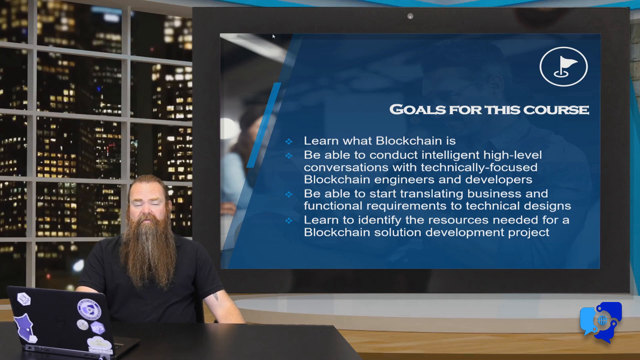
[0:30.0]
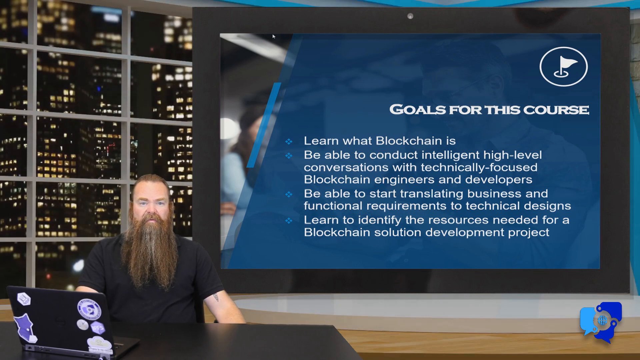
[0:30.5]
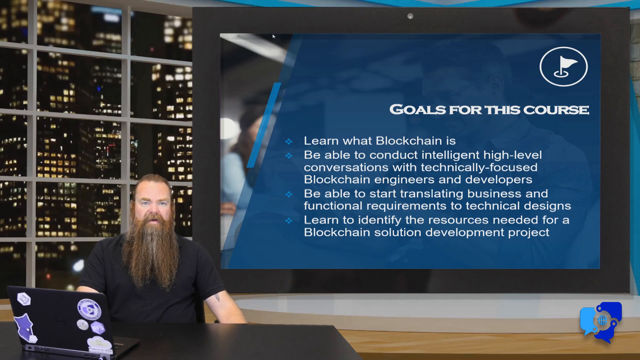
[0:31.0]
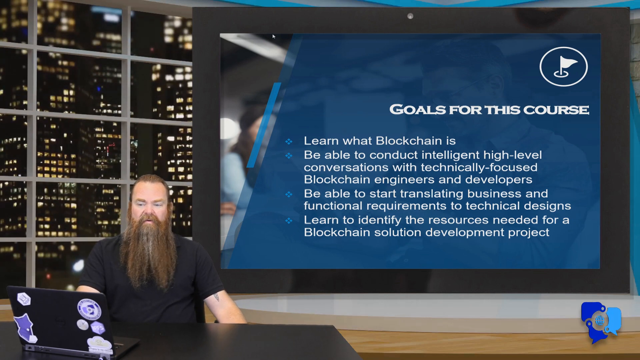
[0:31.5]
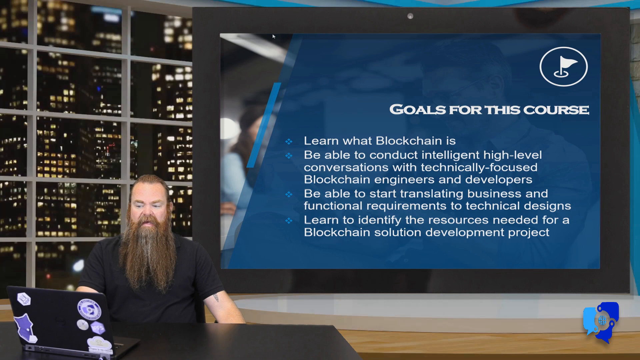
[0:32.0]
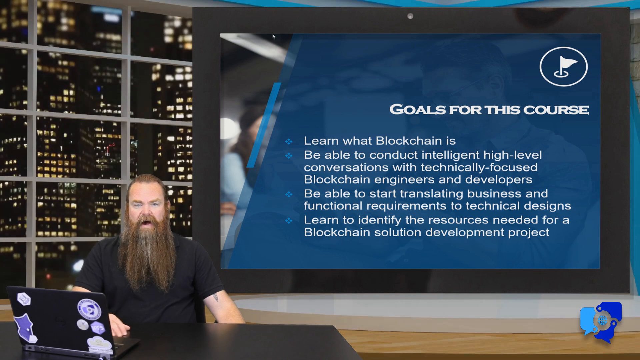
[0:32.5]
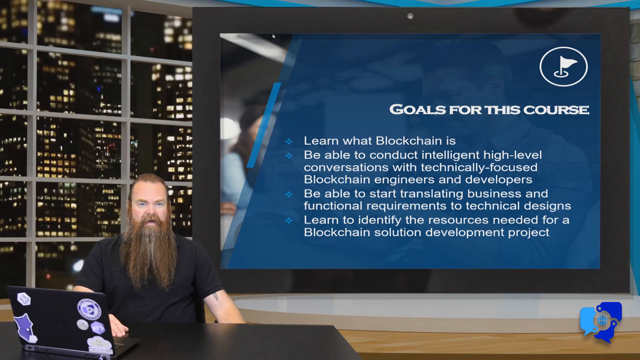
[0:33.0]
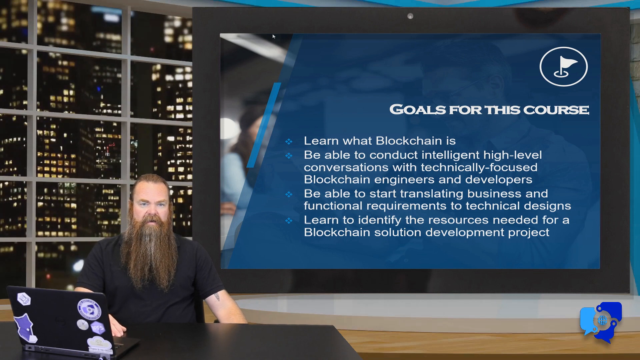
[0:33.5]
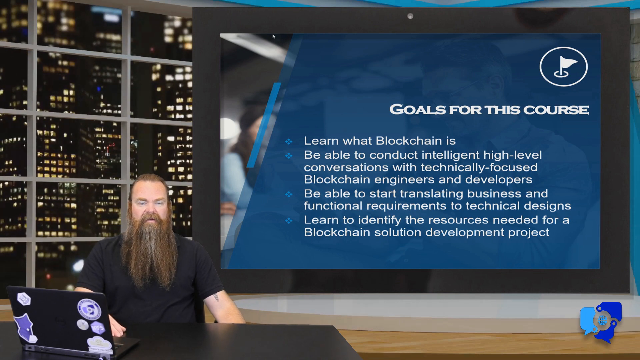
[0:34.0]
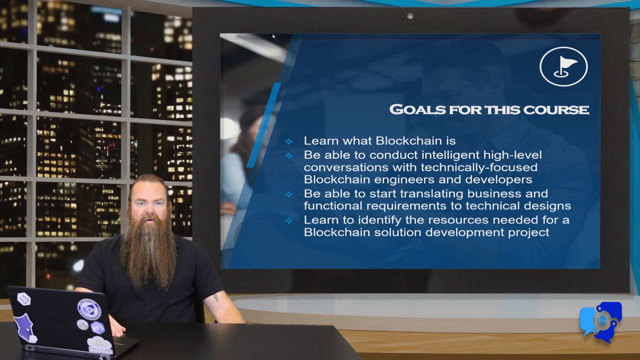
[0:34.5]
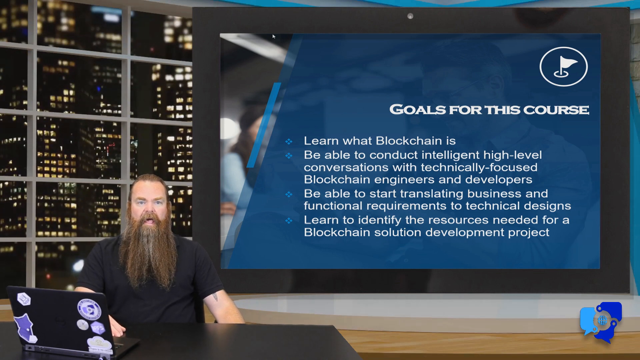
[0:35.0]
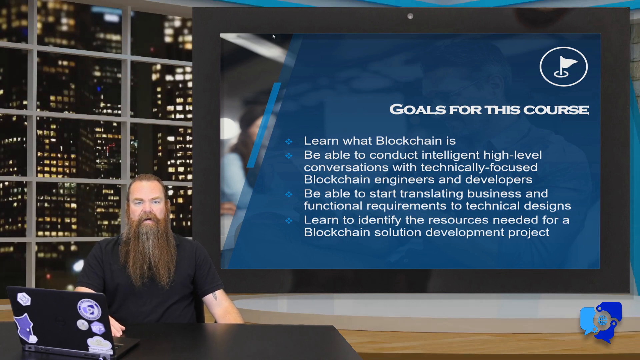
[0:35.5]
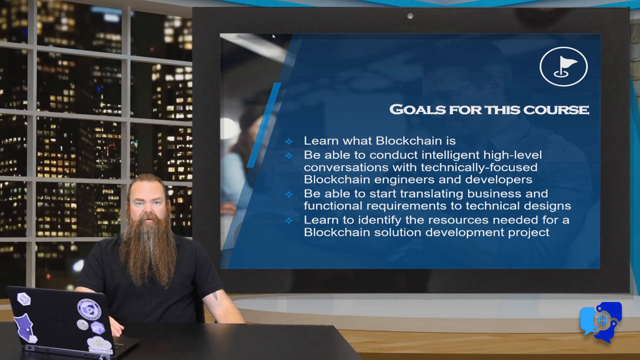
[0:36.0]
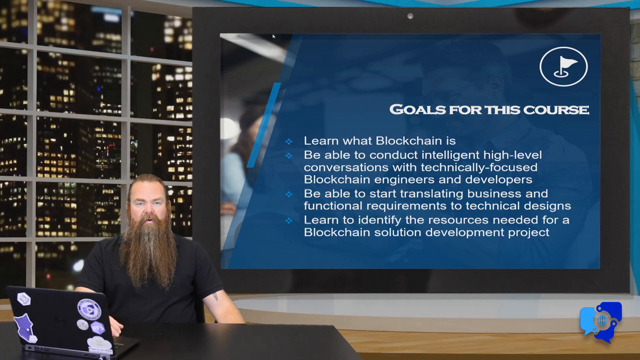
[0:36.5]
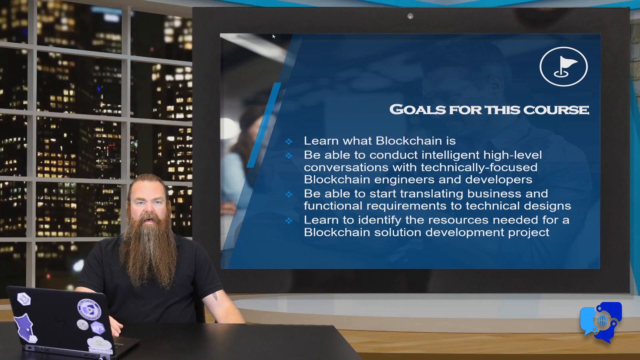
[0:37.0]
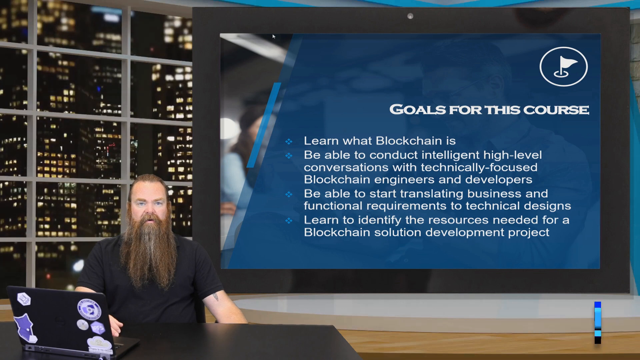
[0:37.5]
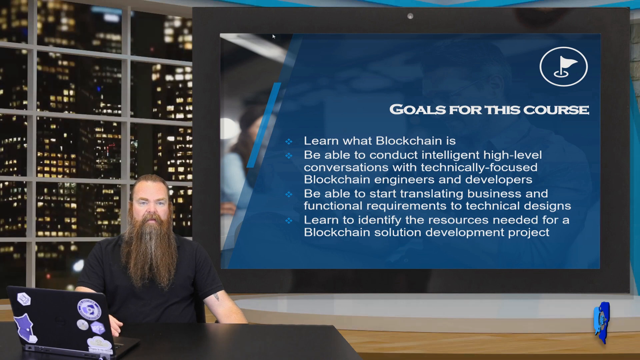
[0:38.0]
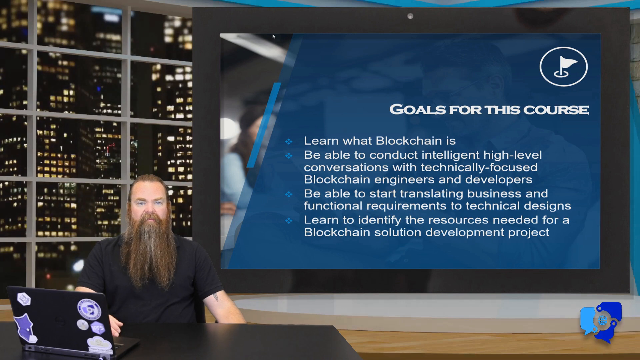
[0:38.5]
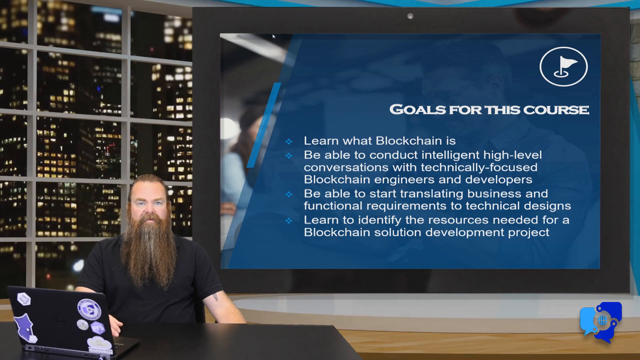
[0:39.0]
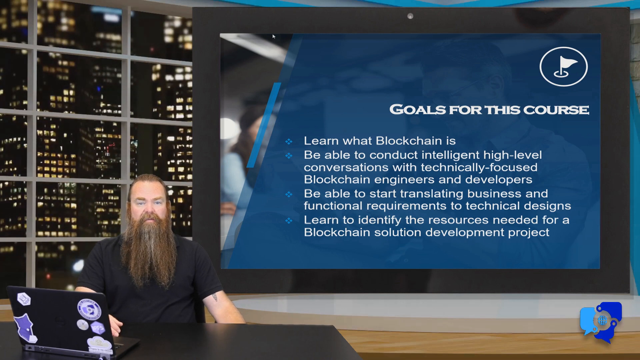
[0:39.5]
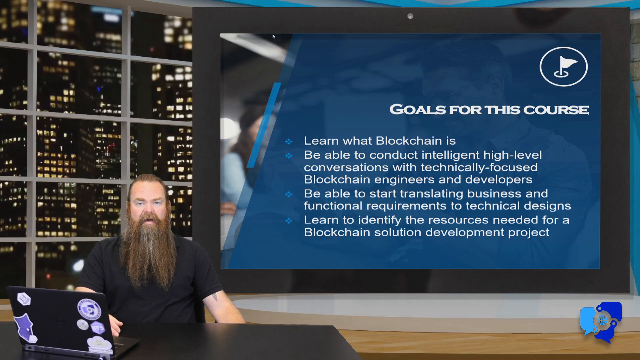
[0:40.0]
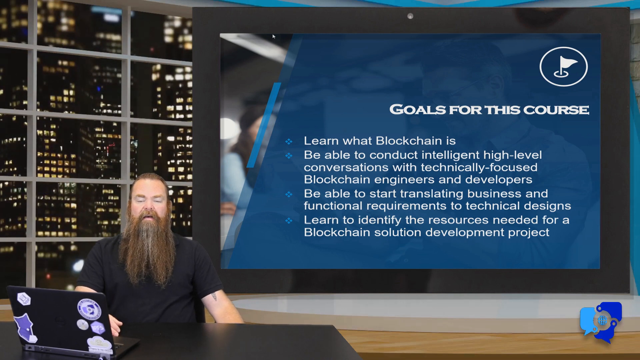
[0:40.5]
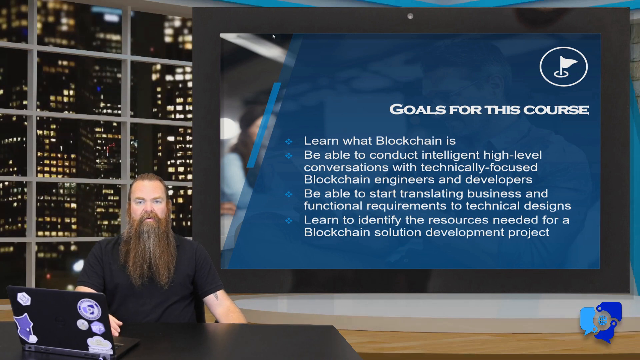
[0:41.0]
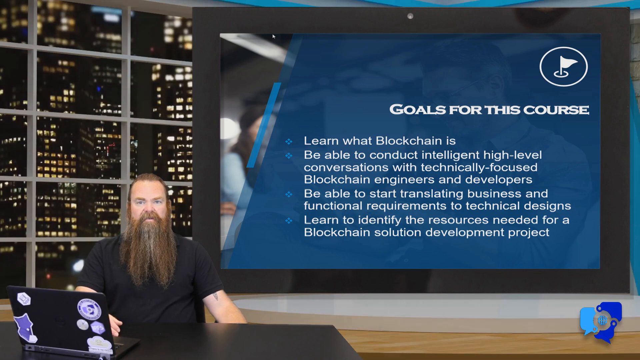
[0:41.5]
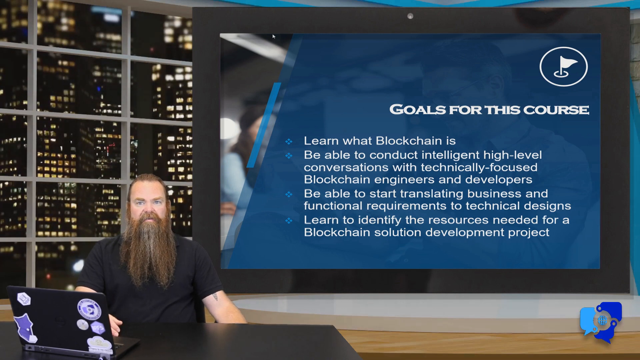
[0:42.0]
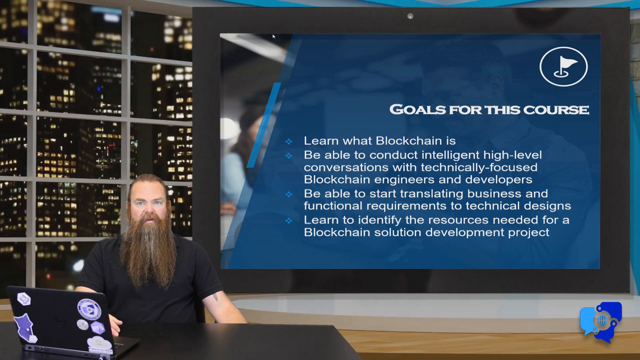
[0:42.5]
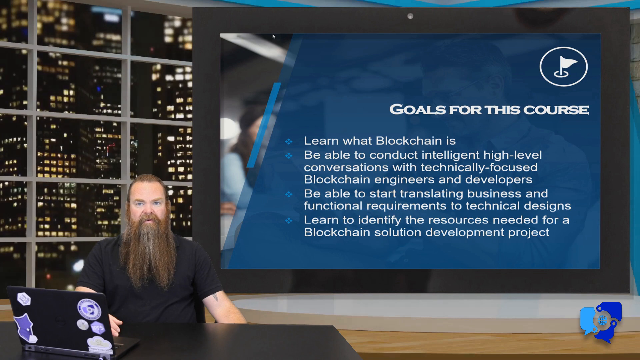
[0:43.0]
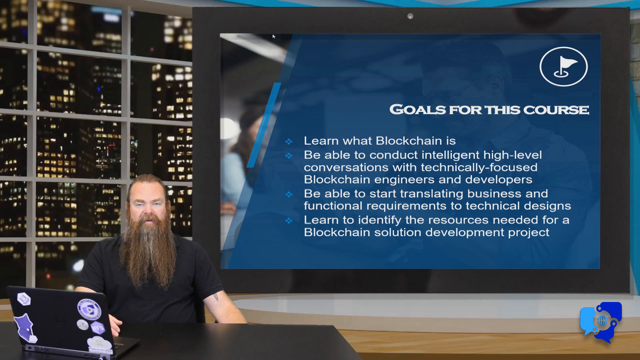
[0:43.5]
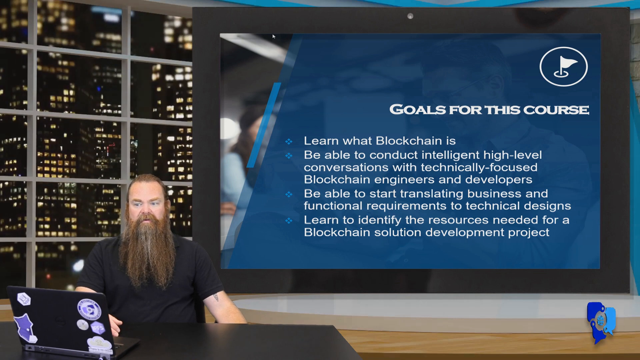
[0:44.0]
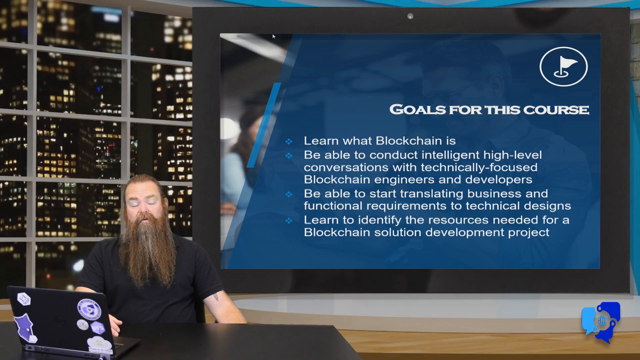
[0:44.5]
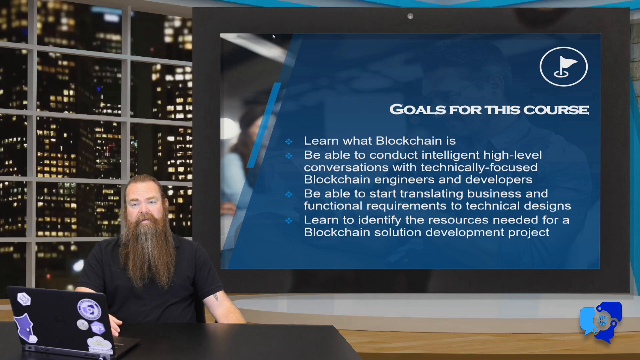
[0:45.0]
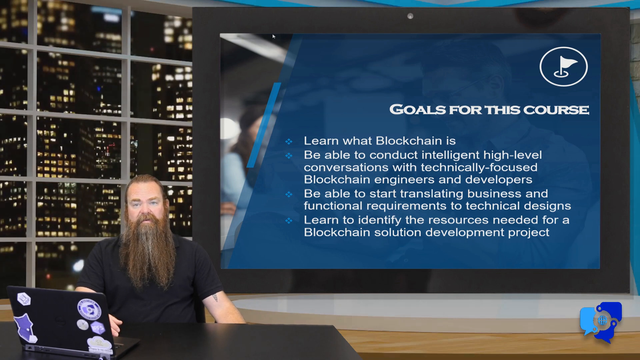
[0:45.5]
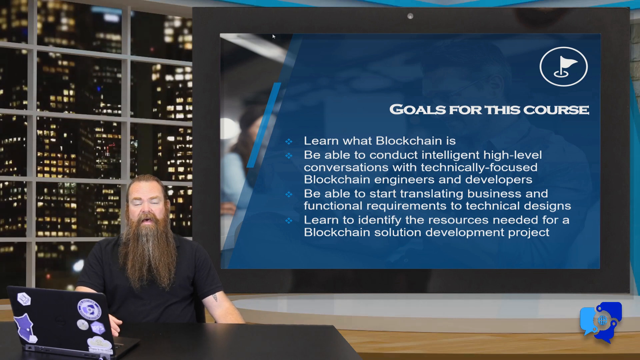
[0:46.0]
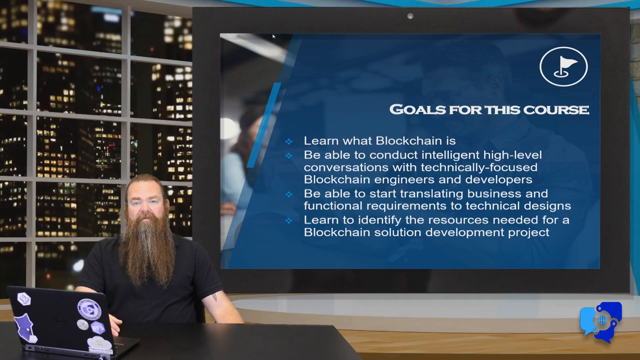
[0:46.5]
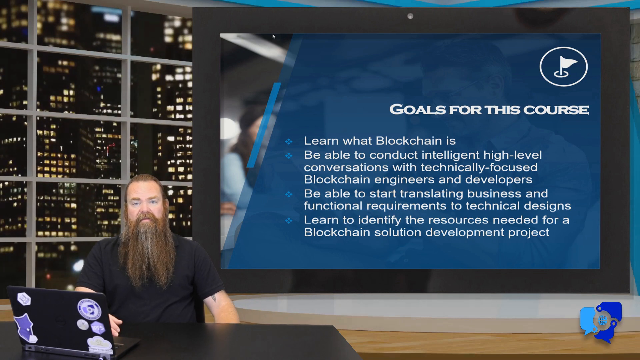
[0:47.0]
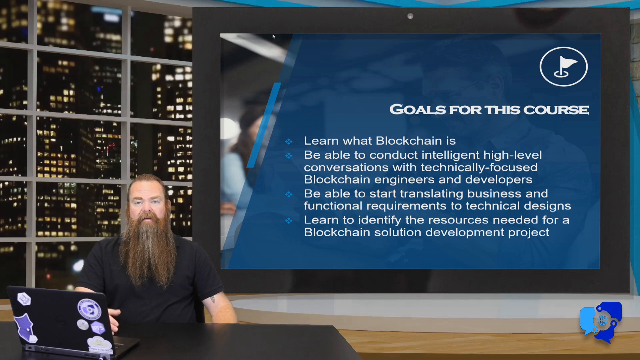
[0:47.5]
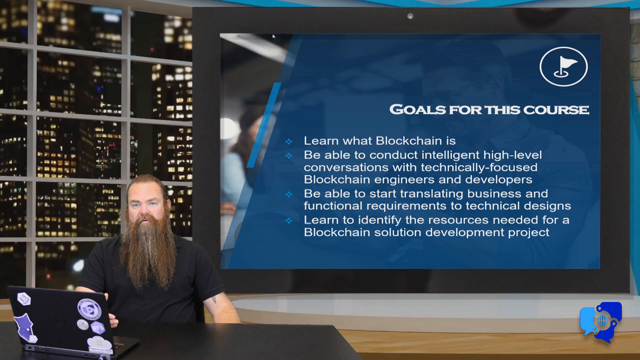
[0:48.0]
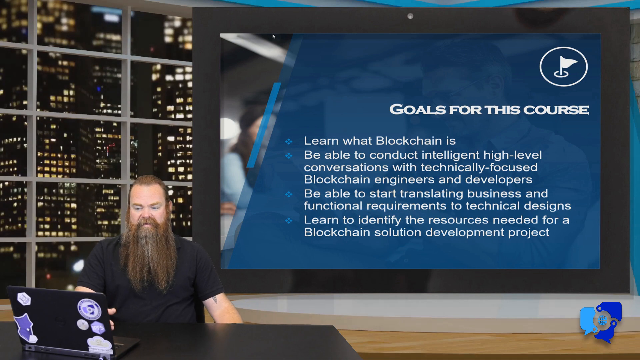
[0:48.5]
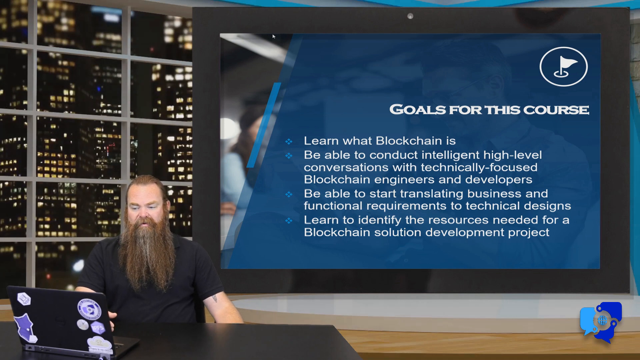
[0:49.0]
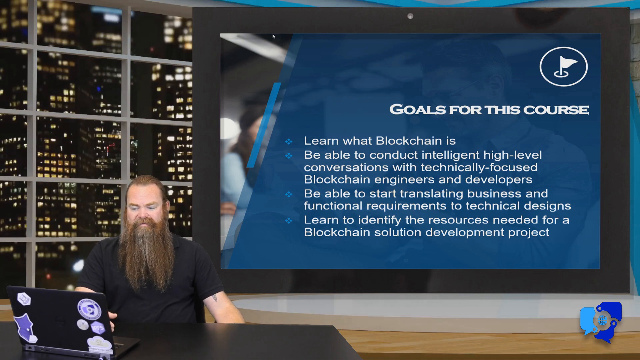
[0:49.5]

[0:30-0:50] A message on the right-hand side of the screen lists the course goals: "Learn what blockchain is, be able to conduct intelligent high-level conversations with technical-focused blockchain engineers and developers, be able to start translating business and functional requirements to technical designs, and learn to identify the resources needed for a blockchain solution development project." On the left-hand side of the screen, the instructor of the course is sitting in front of his laptop.